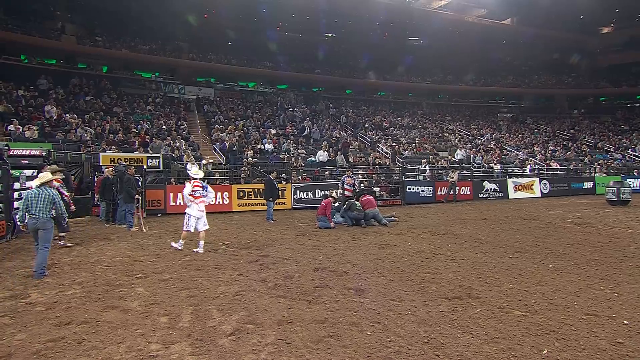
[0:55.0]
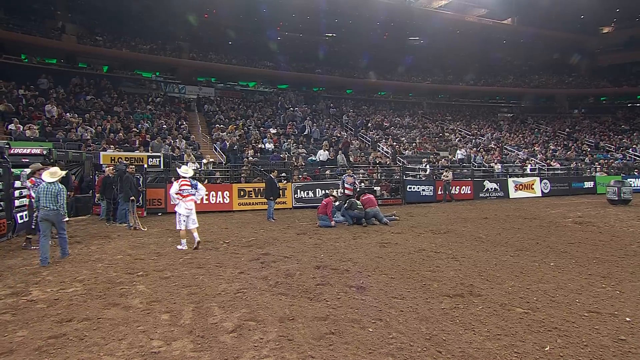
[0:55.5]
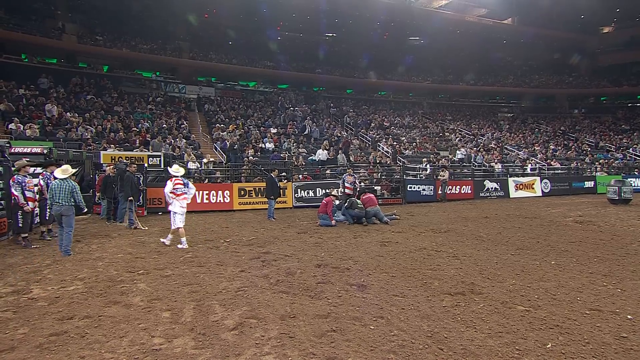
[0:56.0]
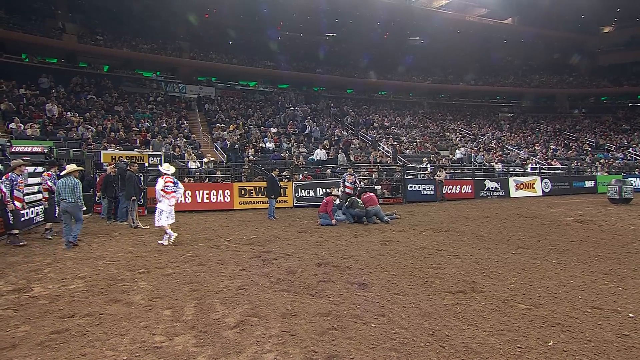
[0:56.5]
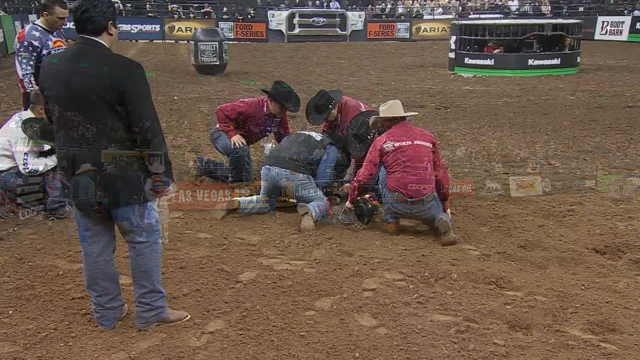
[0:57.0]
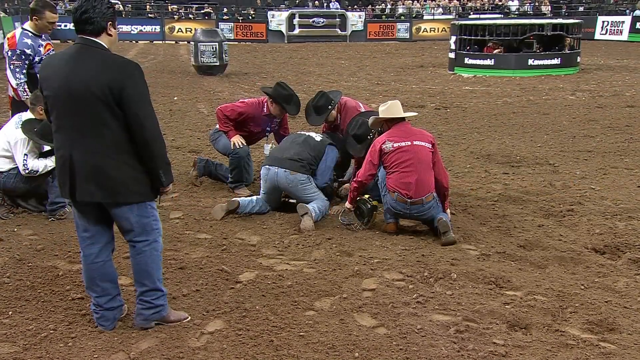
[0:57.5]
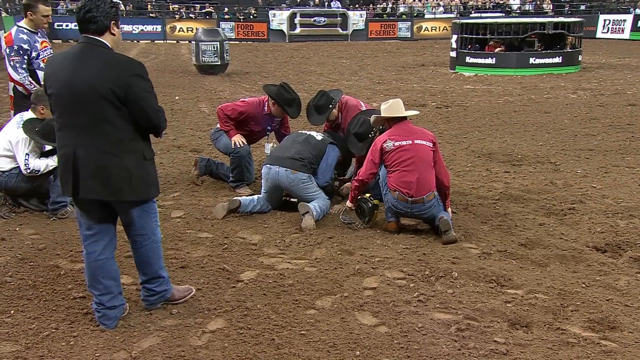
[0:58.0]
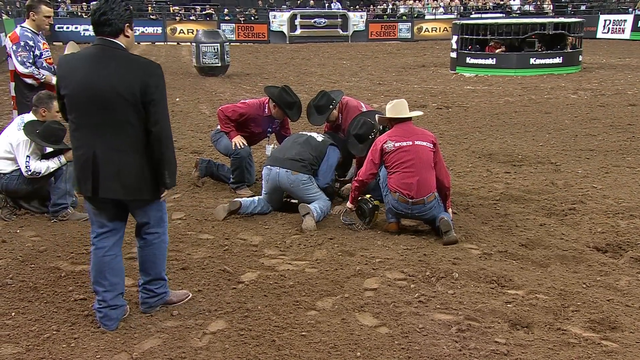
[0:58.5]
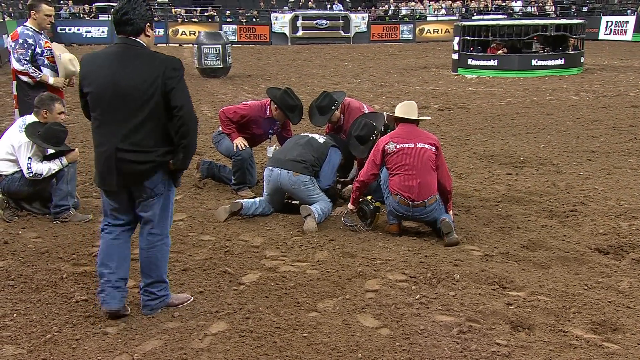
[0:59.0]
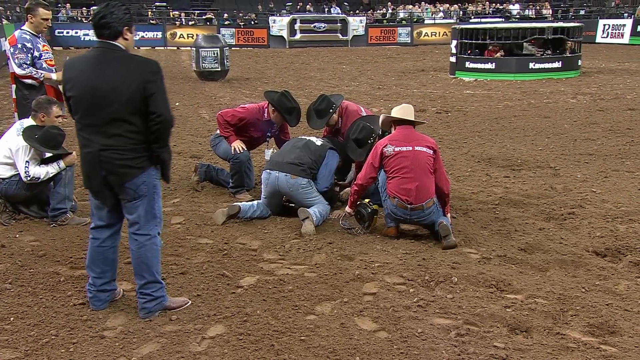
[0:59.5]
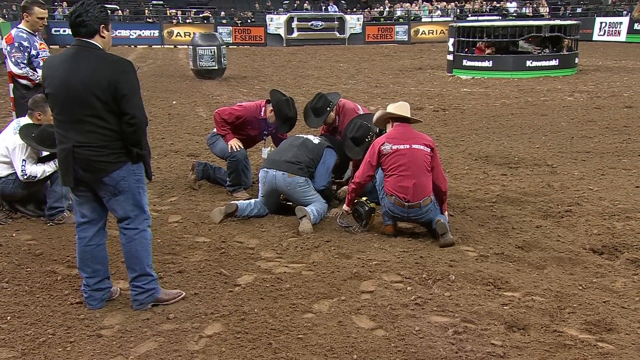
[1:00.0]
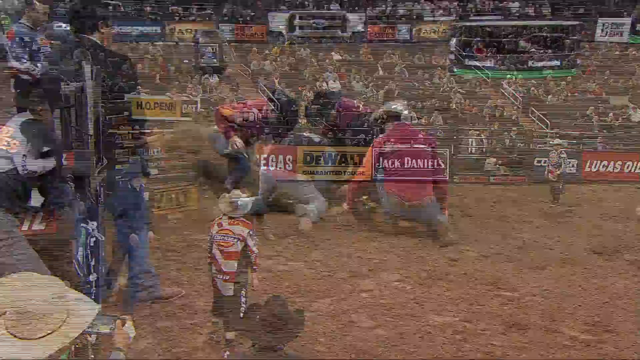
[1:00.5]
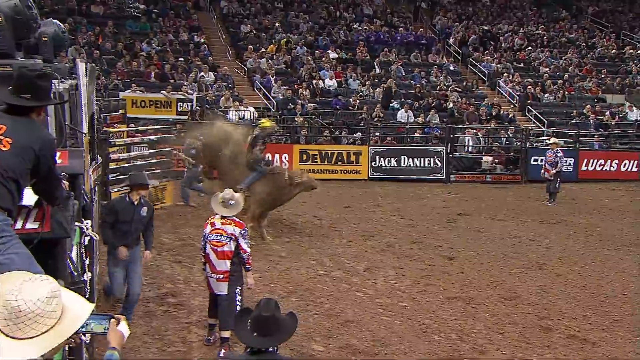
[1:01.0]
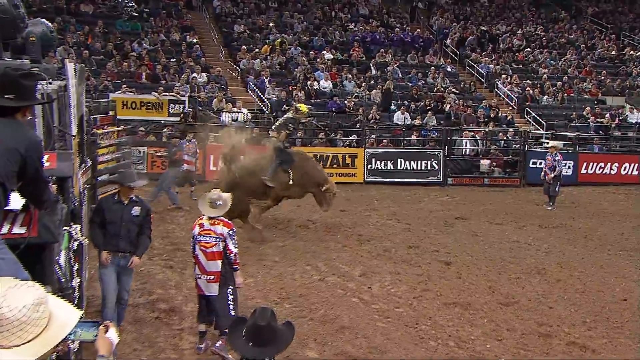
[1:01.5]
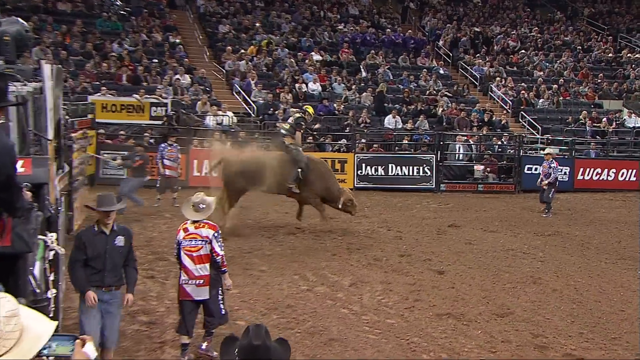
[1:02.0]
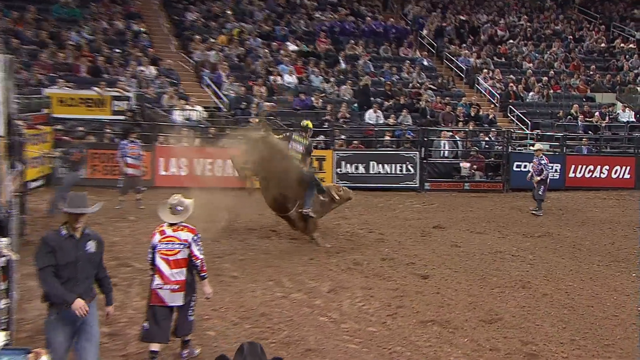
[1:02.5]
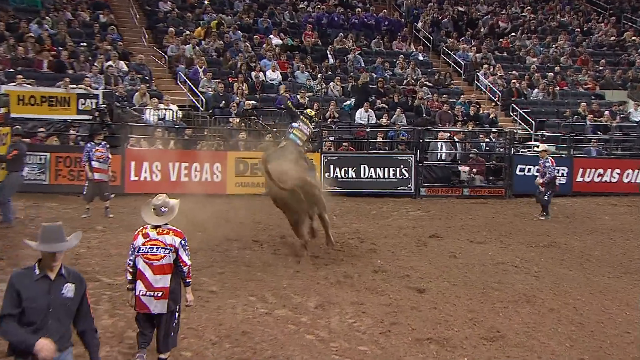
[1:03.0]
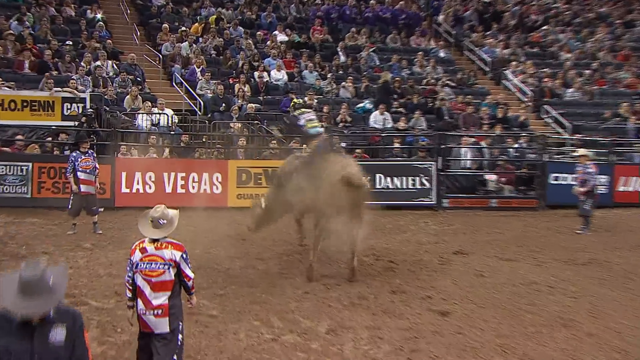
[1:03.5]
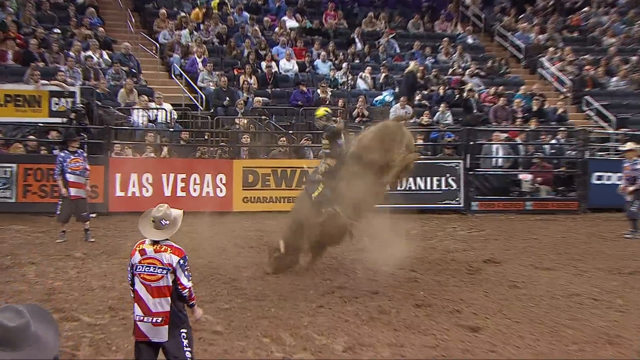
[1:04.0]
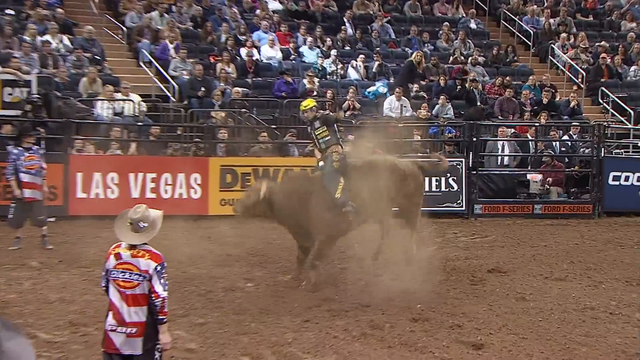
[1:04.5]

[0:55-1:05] The man still lies on the floor. The video cuts to a closer camera angle, but the man still cannot be seen, mostly because the medical team surrounds him. One of the men in red shirts is close enough that the text on the back of his shirt can be read: "sports medicine". A man in a sports coat and jeans stands over the scene. The video then cuts to a replay of the man riding the bull as it first came out of the pen. Everyone in the stadium seems concerned for the man.